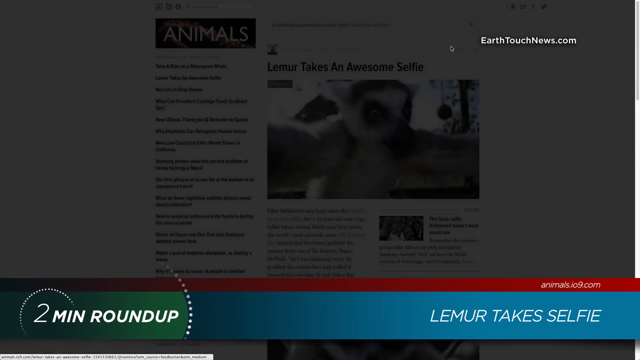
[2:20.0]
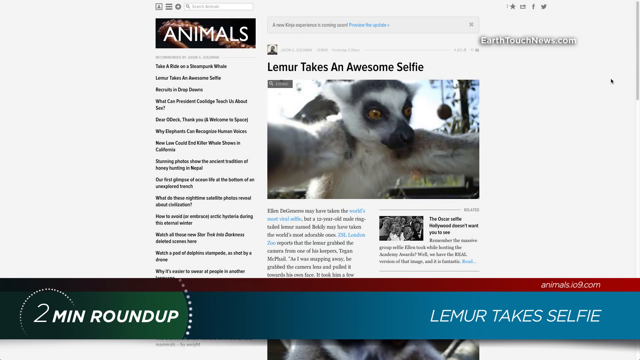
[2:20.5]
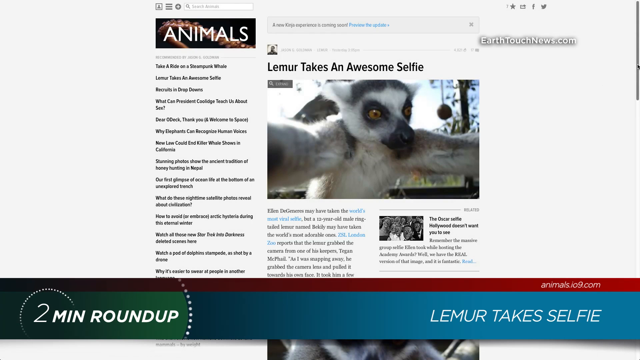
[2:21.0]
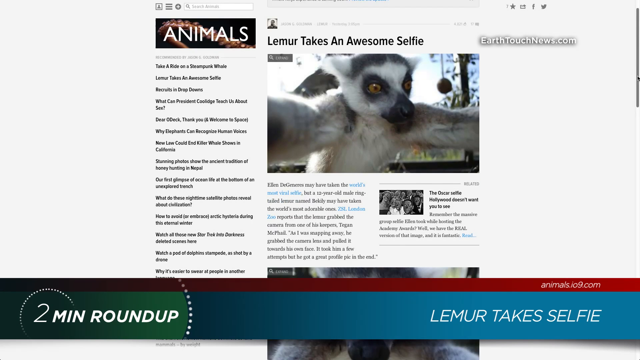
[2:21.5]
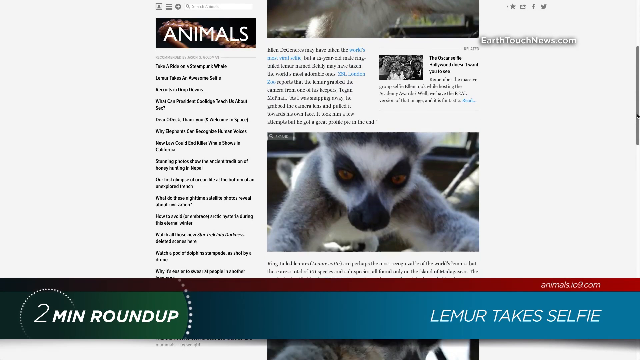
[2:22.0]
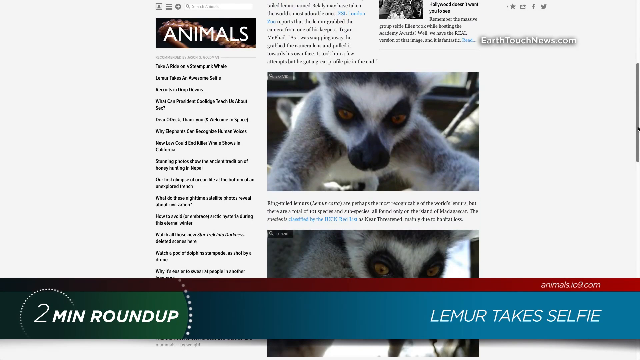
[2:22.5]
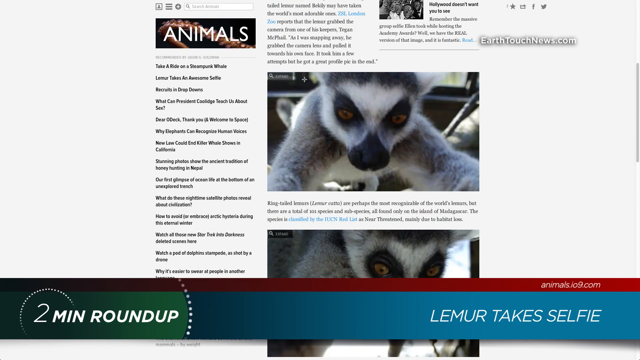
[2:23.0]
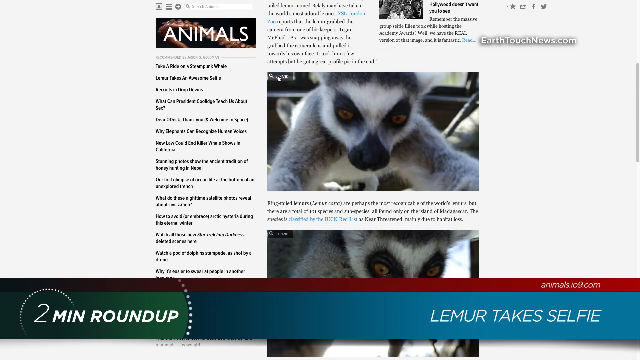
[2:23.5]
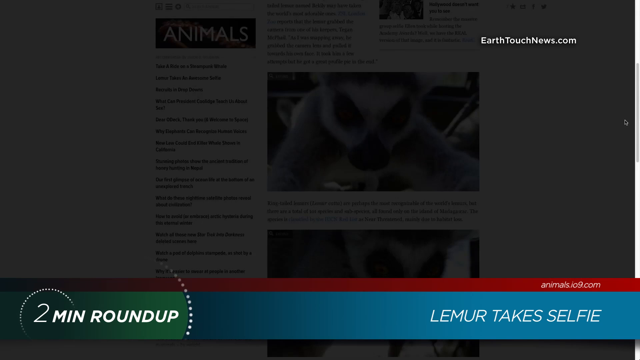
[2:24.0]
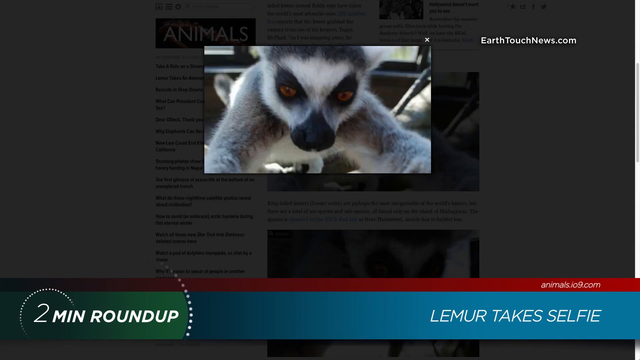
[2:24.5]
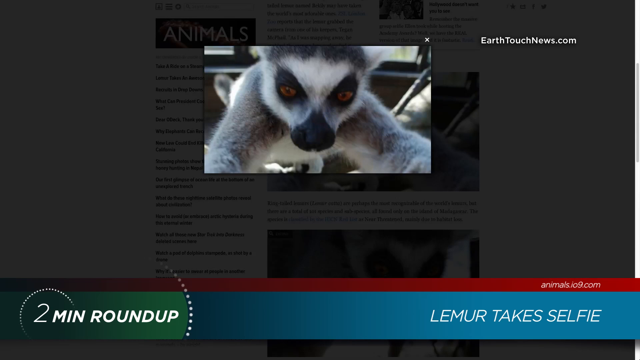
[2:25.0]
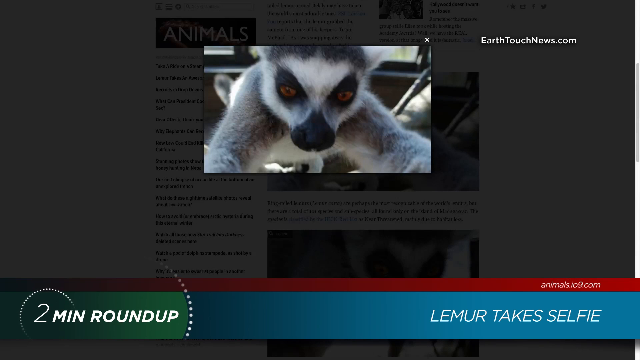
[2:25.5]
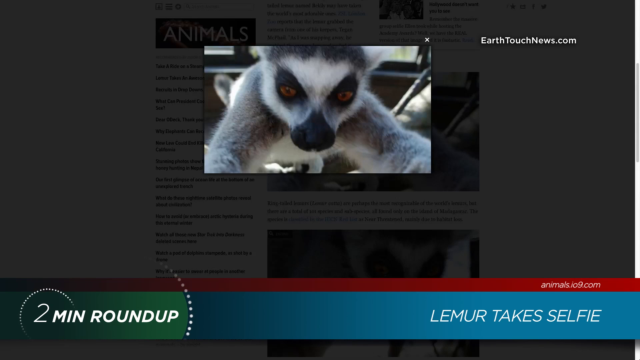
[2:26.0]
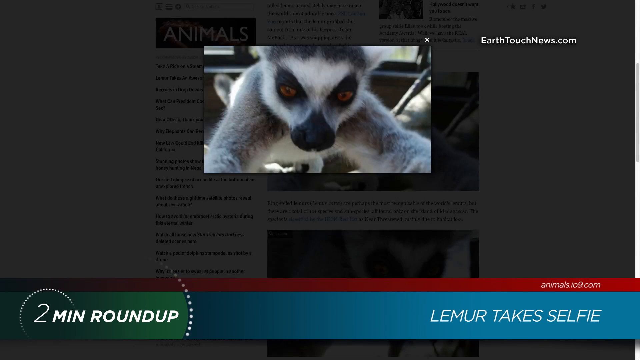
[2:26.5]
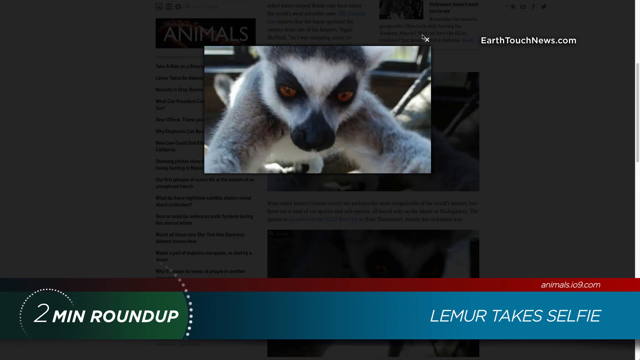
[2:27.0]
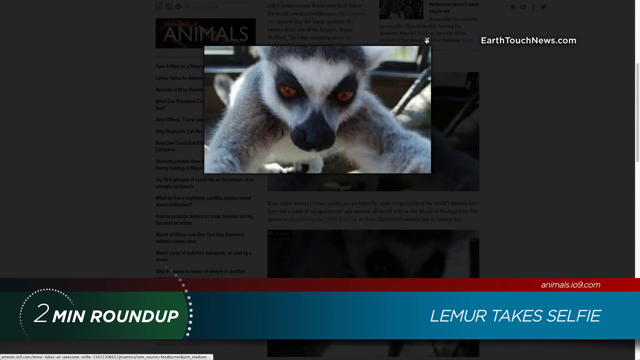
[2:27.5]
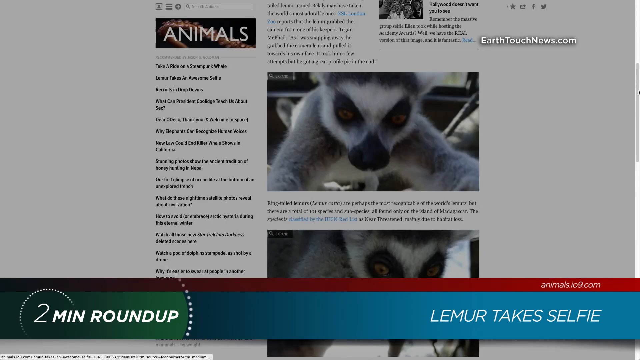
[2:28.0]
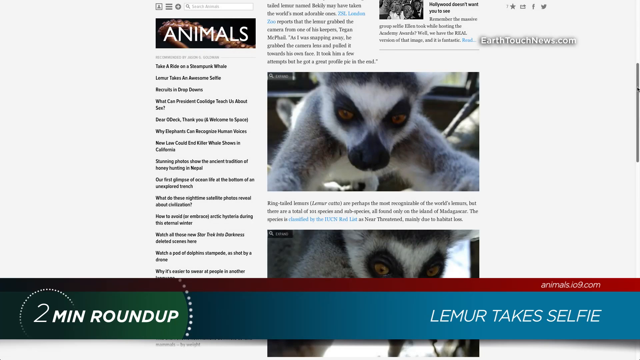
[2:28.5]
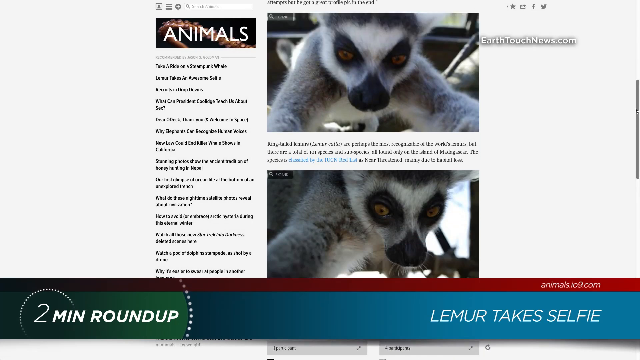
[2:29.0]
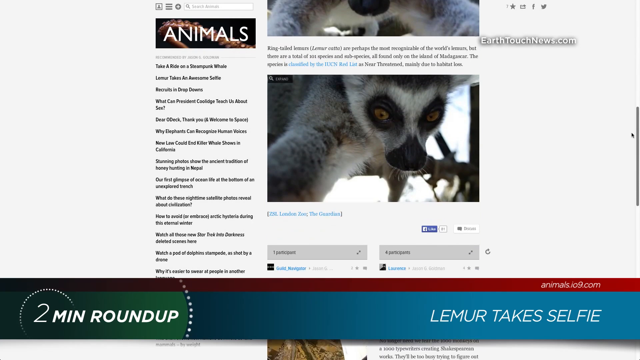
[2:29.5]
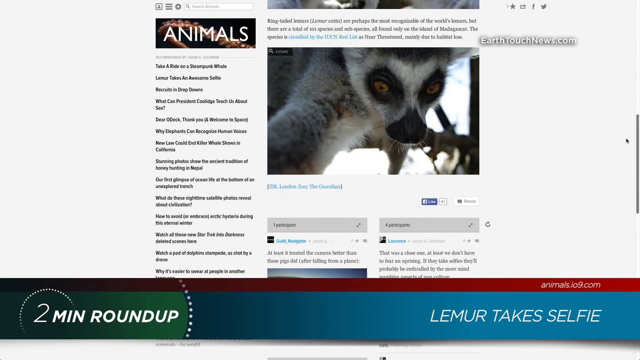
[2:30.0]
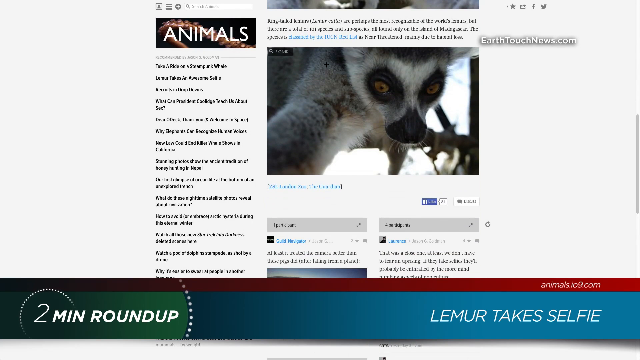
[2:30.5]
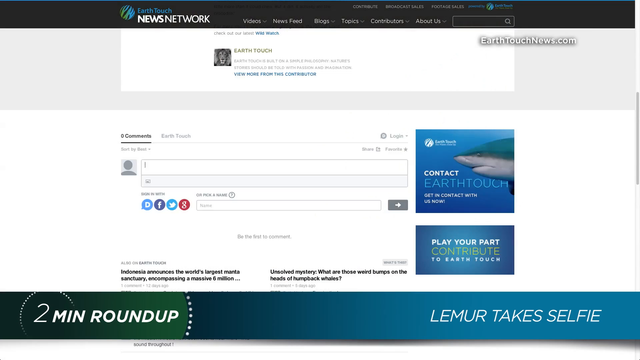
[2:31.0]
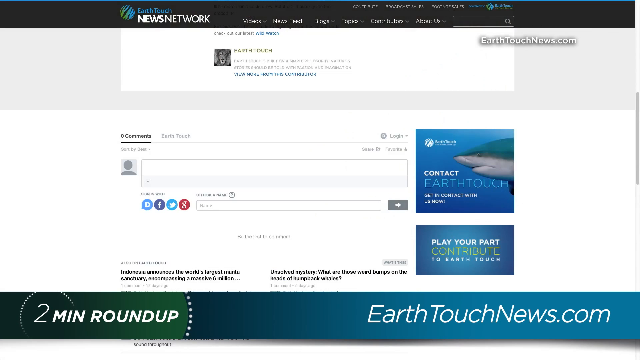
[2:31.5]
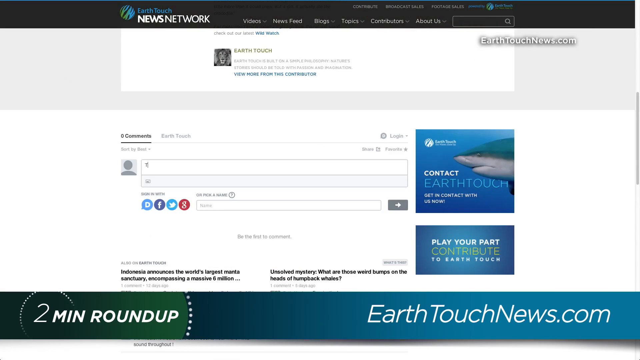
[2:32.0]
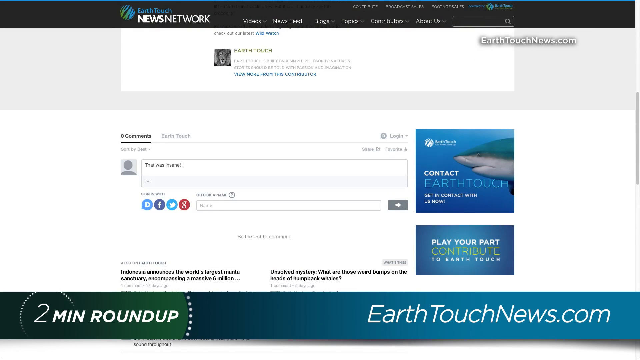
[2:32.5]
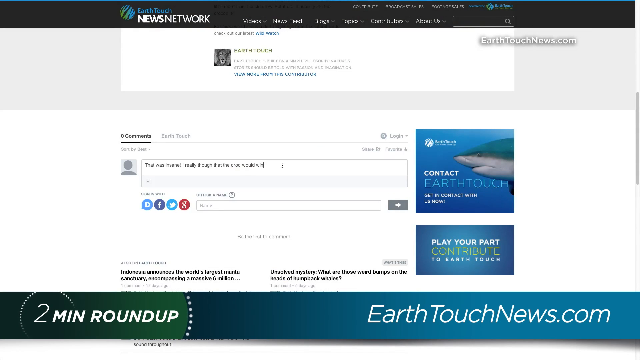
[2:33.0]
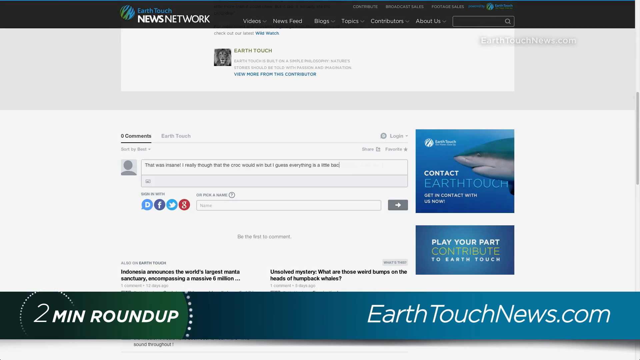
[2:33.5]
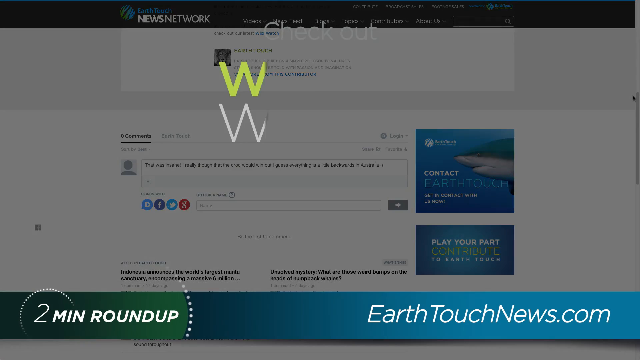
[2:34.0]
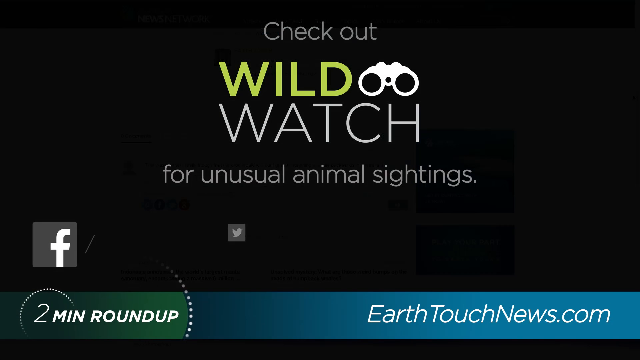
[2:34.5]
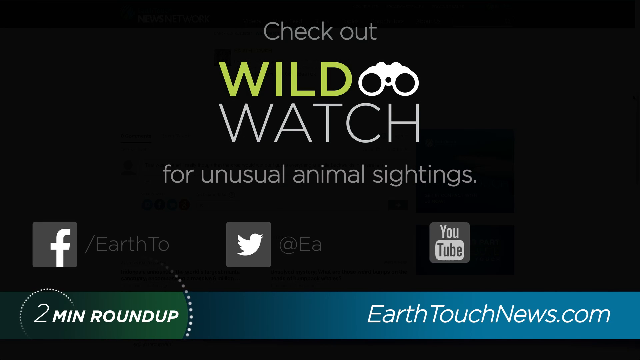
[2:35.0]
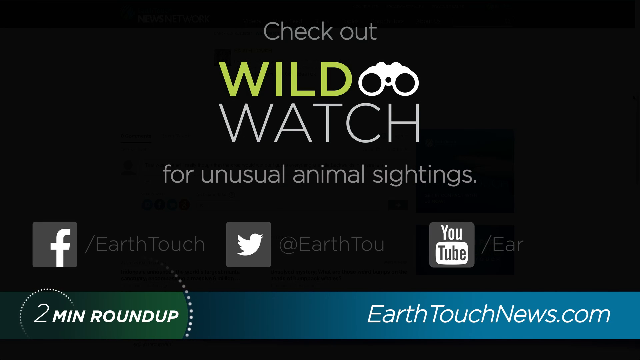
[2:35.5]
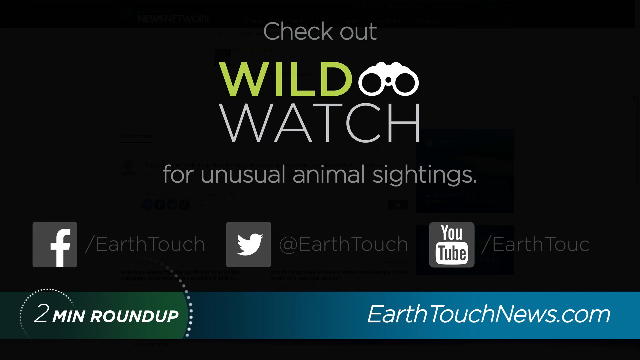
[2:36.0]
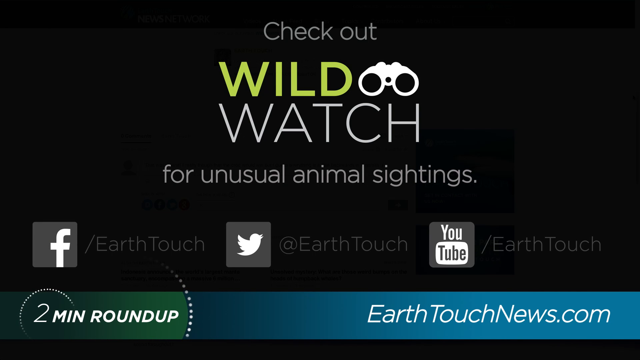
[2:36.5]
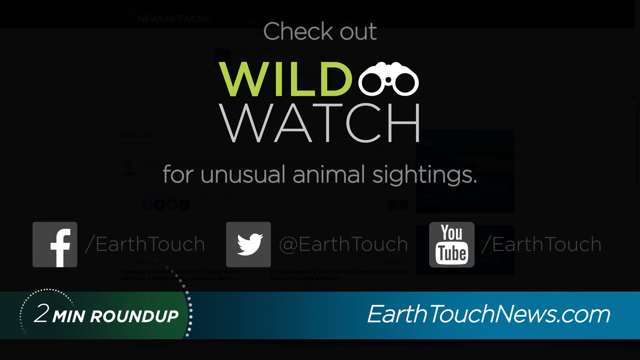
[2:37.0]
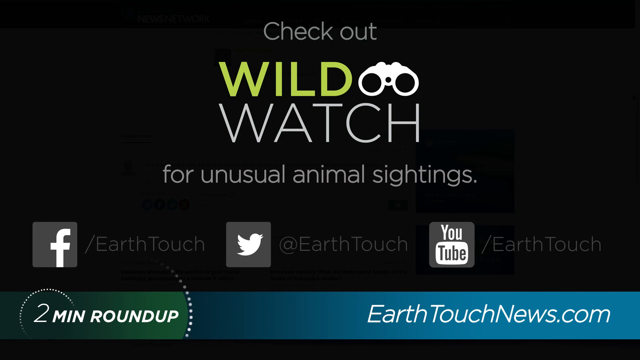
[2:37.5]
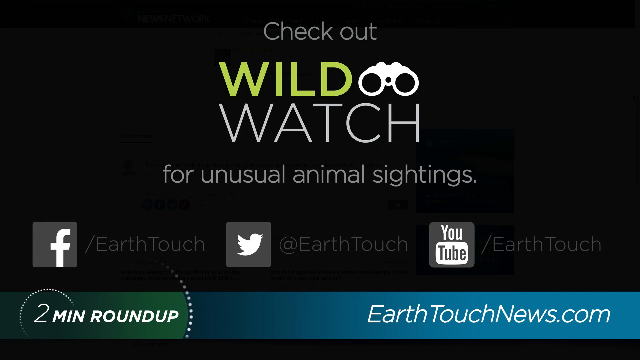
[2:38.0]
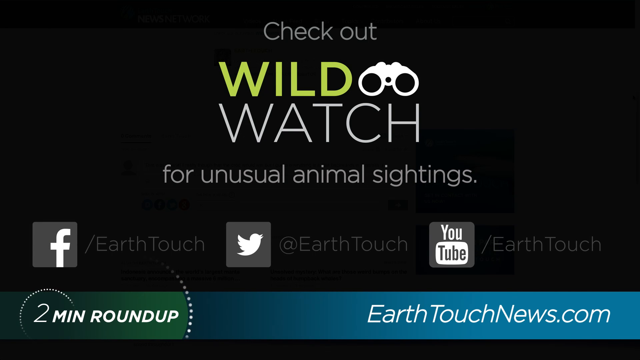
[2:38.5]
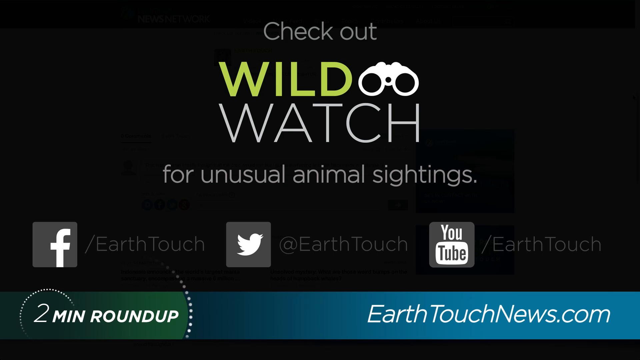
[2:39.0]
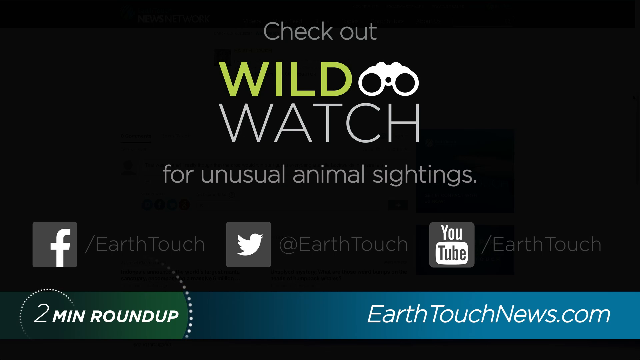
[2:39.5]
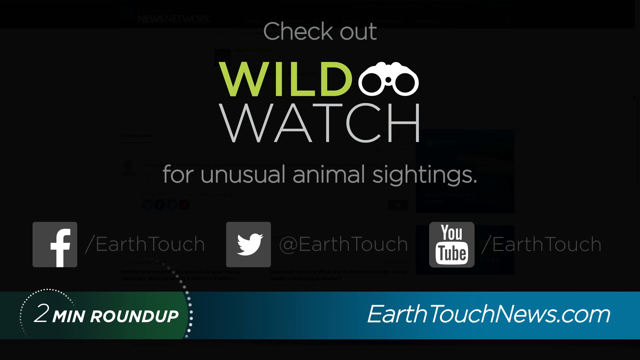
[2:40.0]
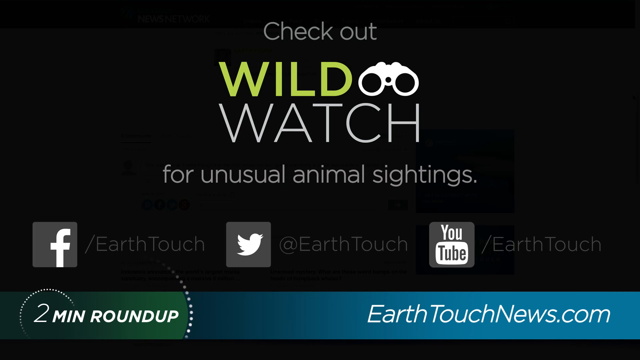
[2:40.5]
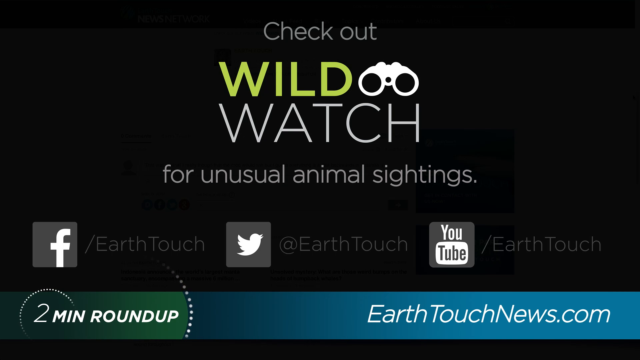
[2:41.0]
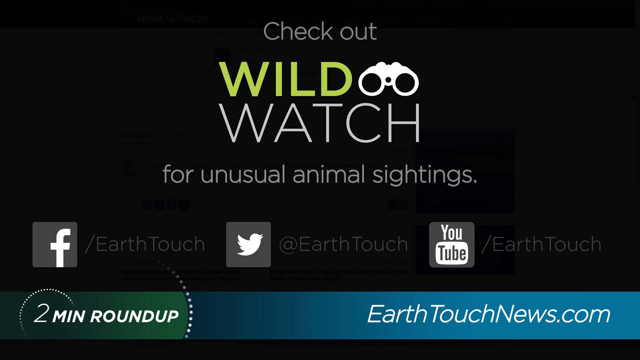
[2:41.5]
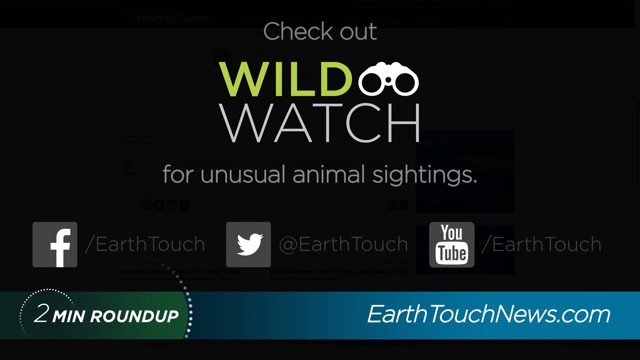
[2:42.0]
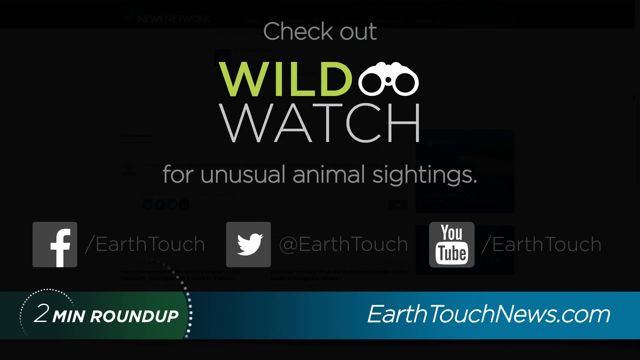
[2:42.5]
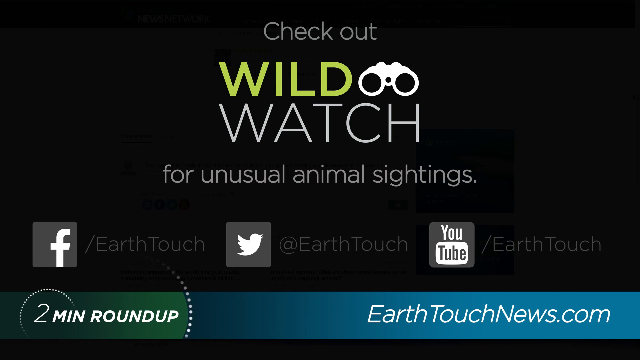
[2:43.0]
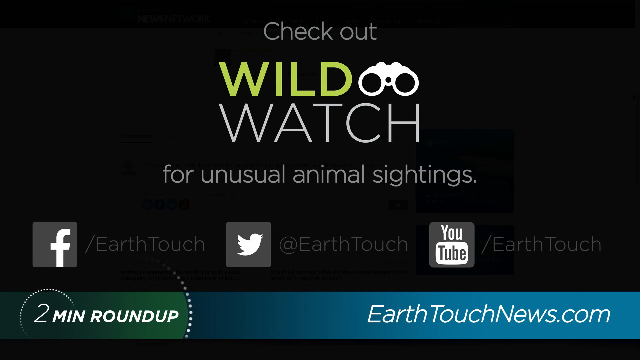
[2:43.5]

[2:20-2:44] A page titled "lemur takes a selfie" has "animals" at the top and various links below, and a person uses a mouse to scroll through it. They click on the top left of a picture of a lemur, which brings up the picture by itself on the screen while everything else is grayed out, then close it by clicking an X. They scroll down a little further and click on the top left of the next picture, which brings up a comments page that is primarily white. They type out a comment, and the page then changes to read "check out wild watch for unusual sightings" with a pair of binoculars, the word "wild" standing out in green. At the bottom are Facebook, Twitter and YouTube, each with "Earthtouch" beside it.